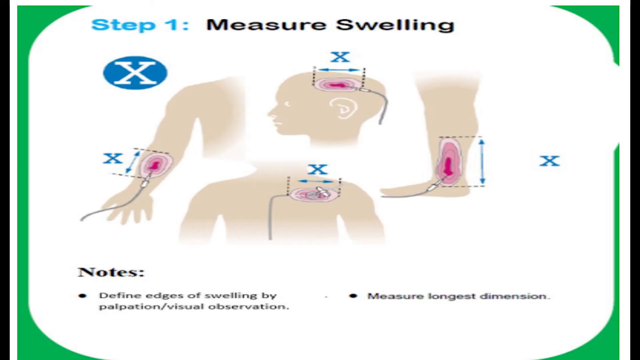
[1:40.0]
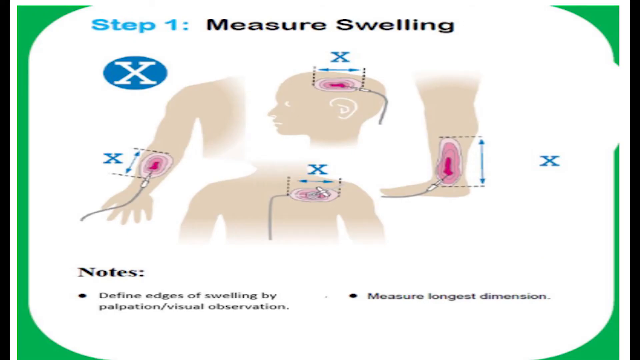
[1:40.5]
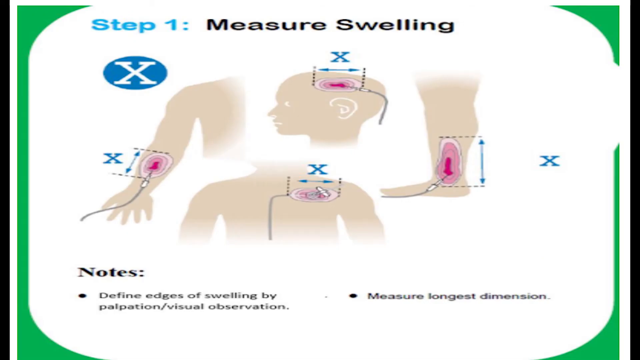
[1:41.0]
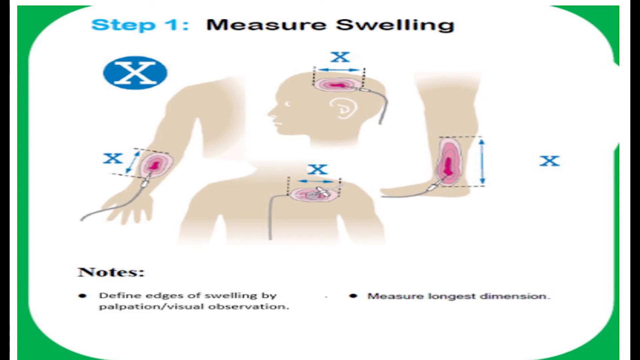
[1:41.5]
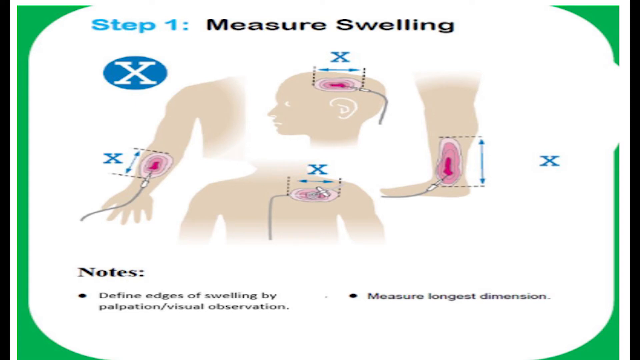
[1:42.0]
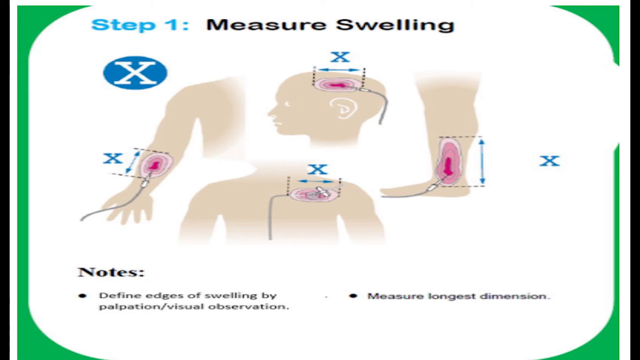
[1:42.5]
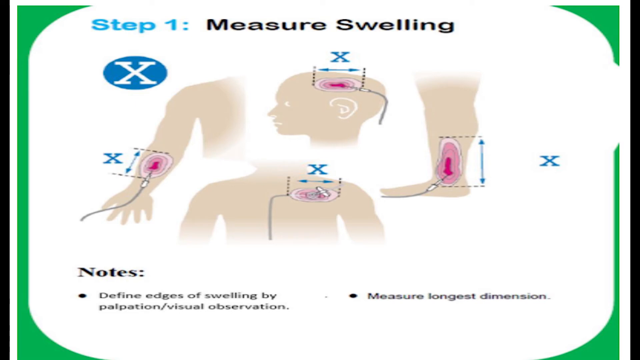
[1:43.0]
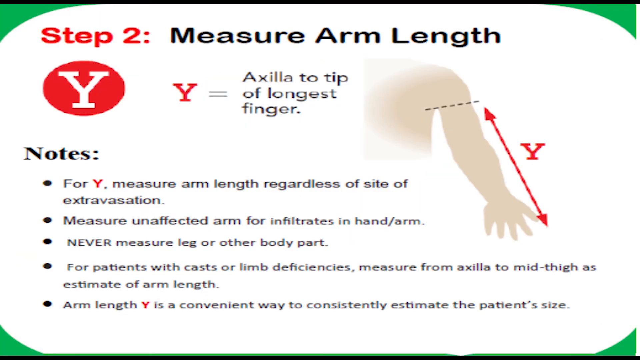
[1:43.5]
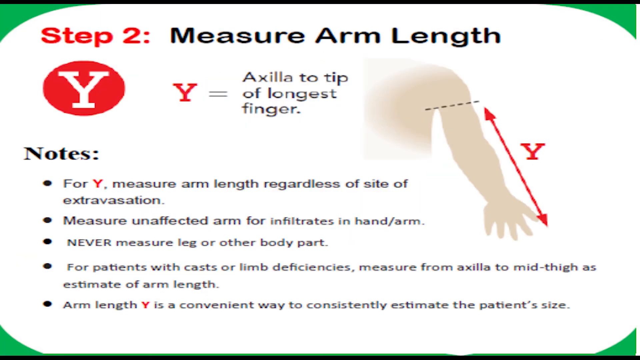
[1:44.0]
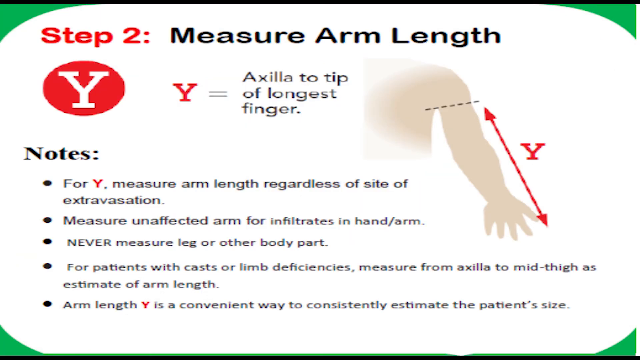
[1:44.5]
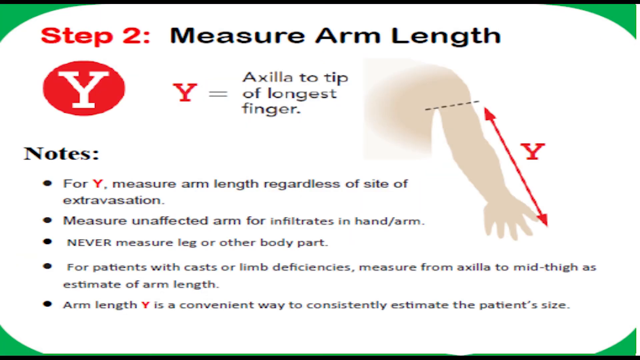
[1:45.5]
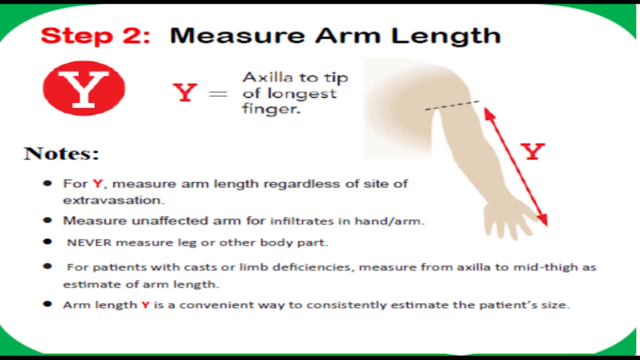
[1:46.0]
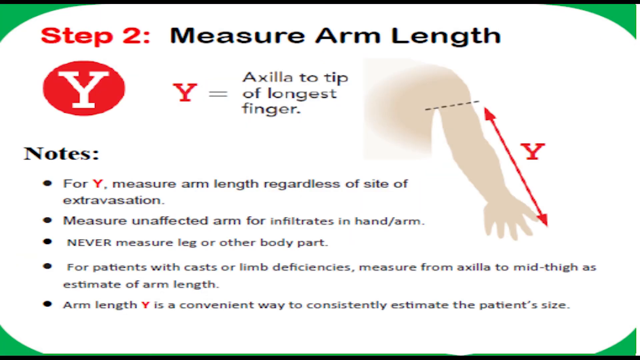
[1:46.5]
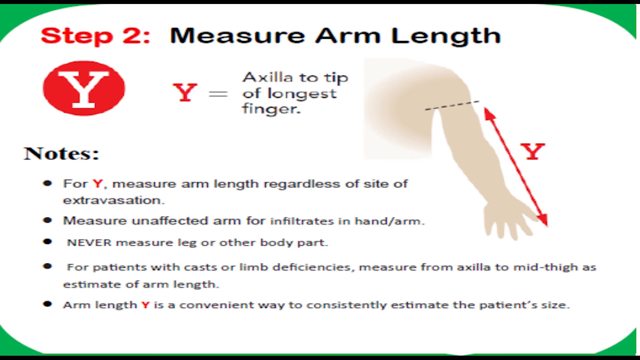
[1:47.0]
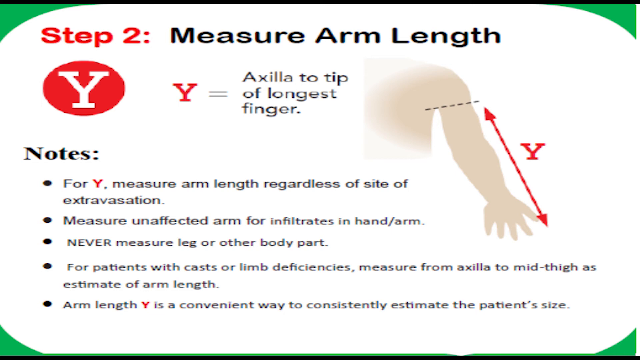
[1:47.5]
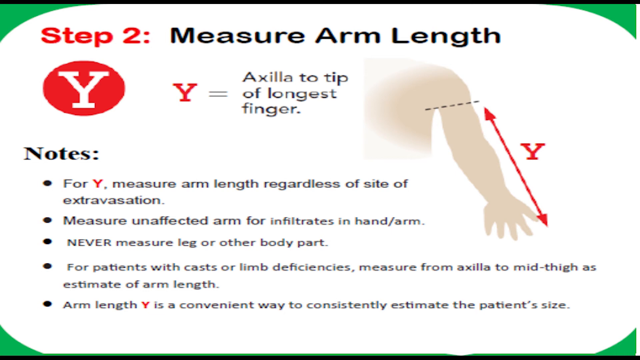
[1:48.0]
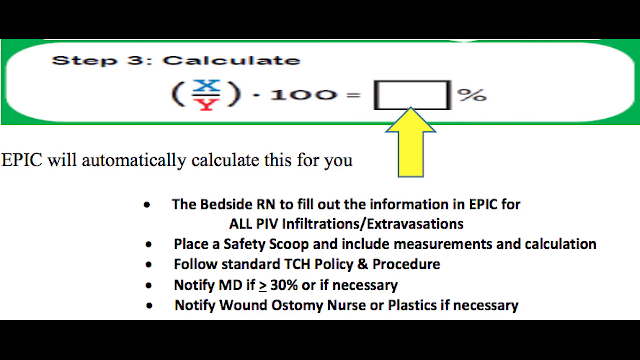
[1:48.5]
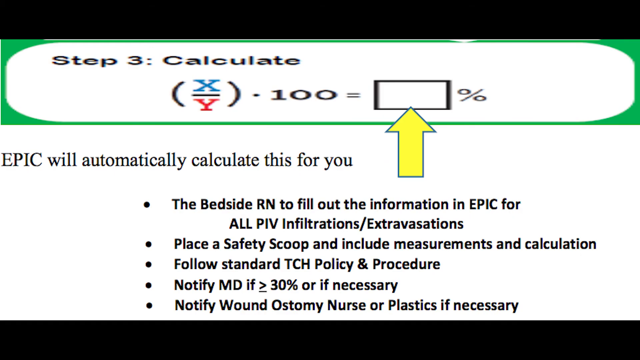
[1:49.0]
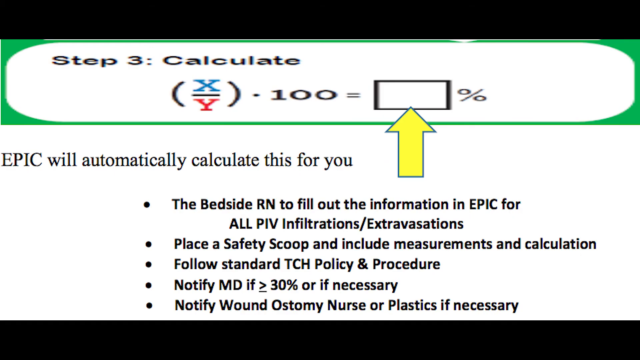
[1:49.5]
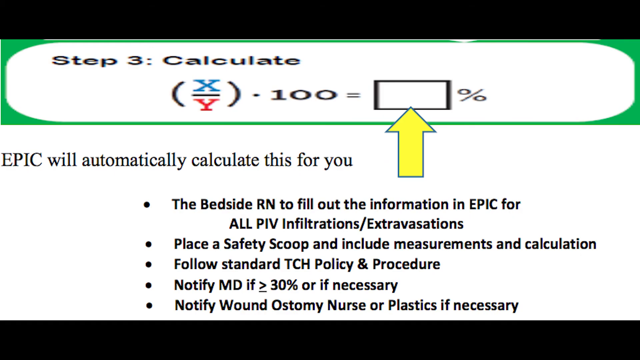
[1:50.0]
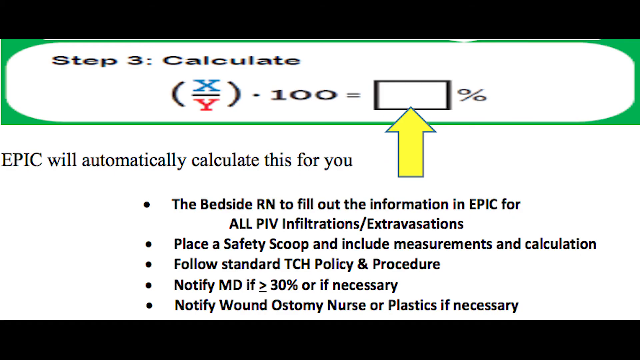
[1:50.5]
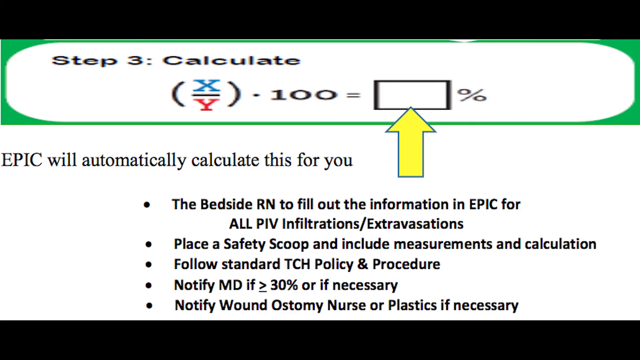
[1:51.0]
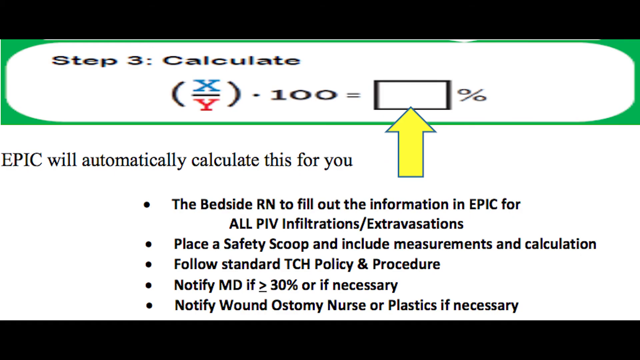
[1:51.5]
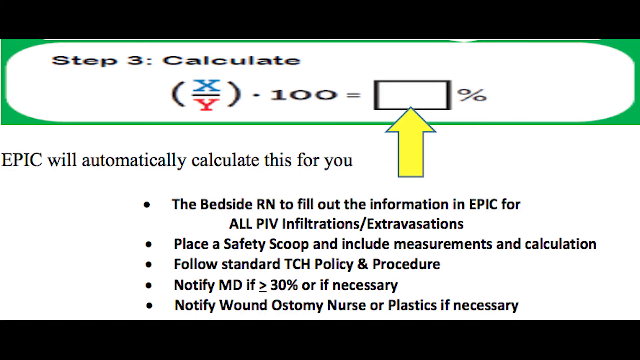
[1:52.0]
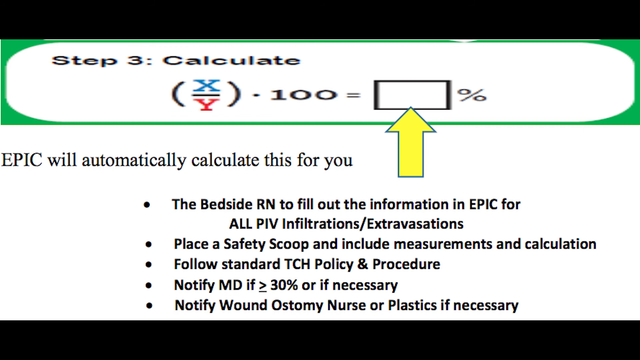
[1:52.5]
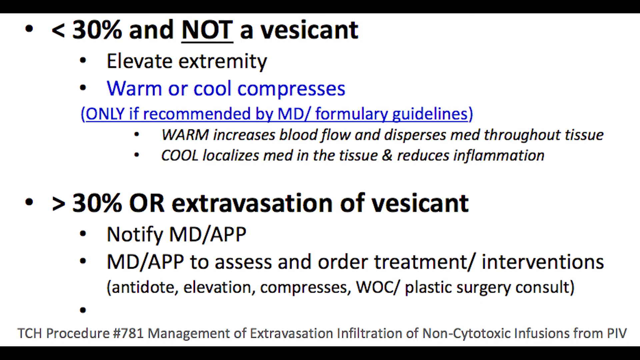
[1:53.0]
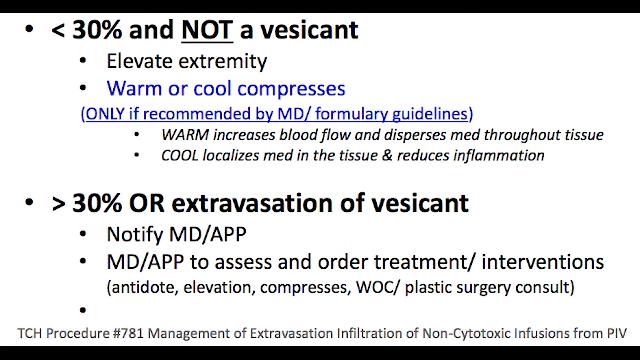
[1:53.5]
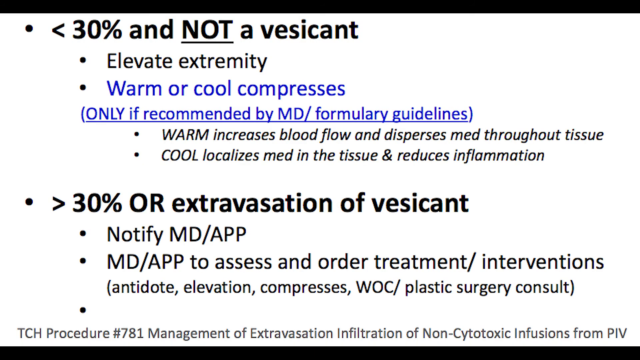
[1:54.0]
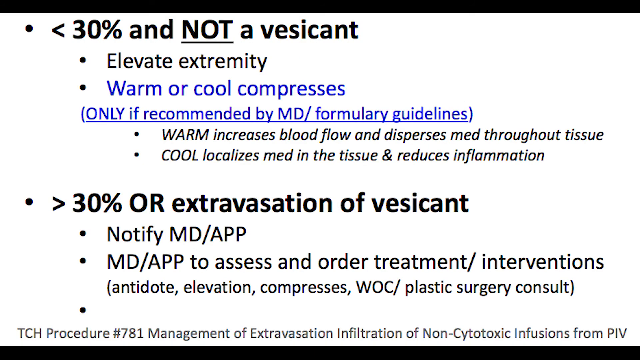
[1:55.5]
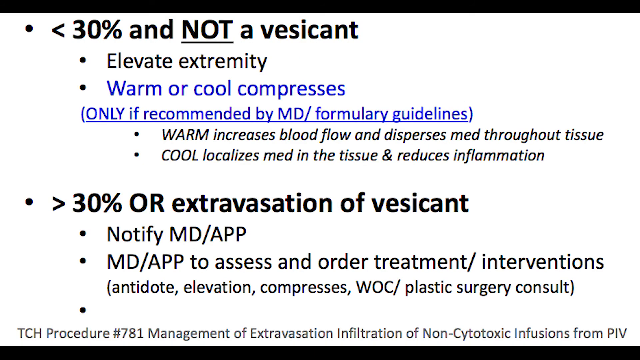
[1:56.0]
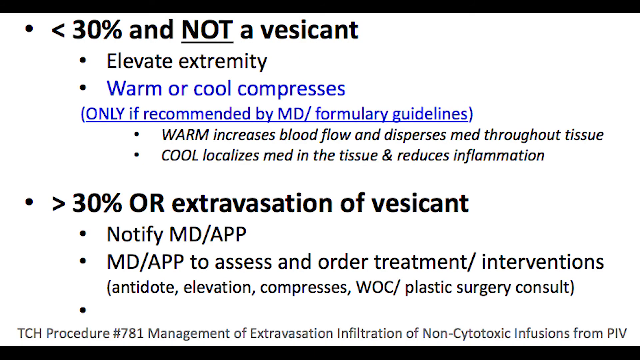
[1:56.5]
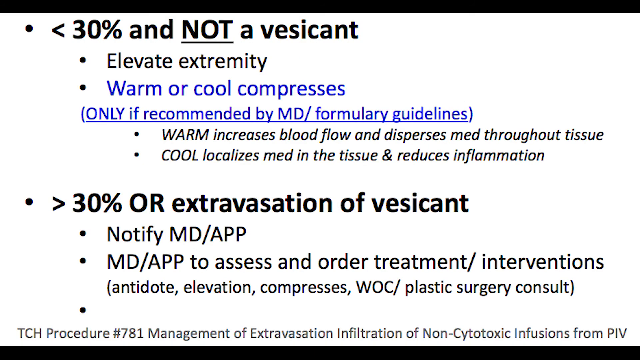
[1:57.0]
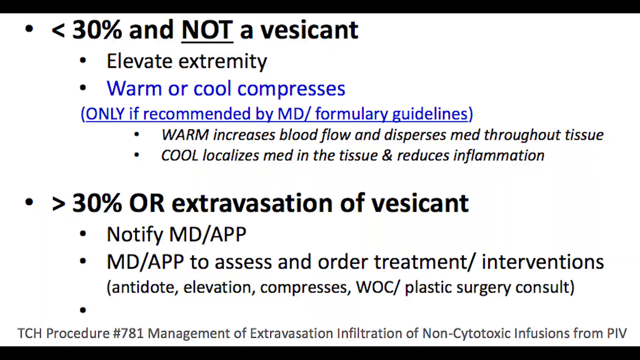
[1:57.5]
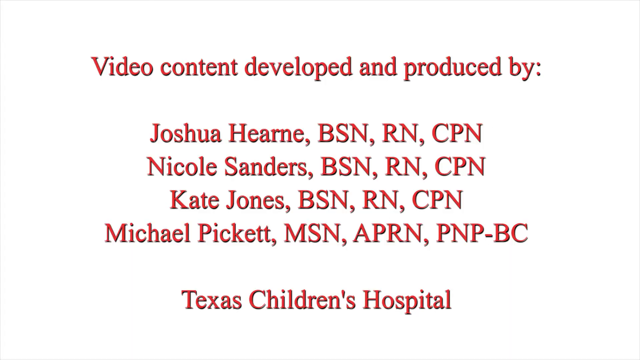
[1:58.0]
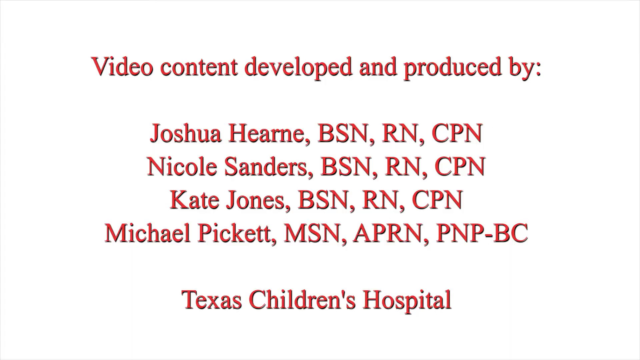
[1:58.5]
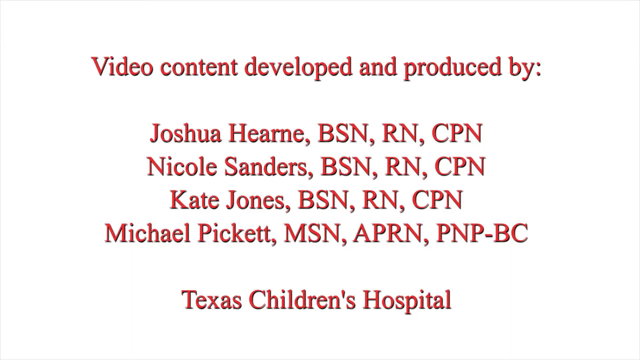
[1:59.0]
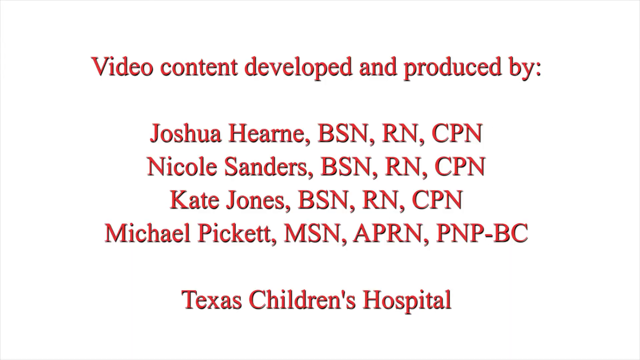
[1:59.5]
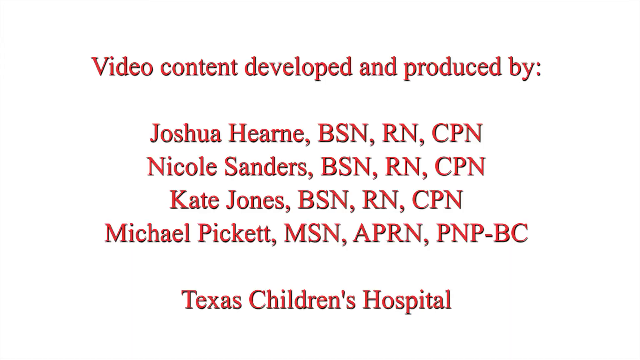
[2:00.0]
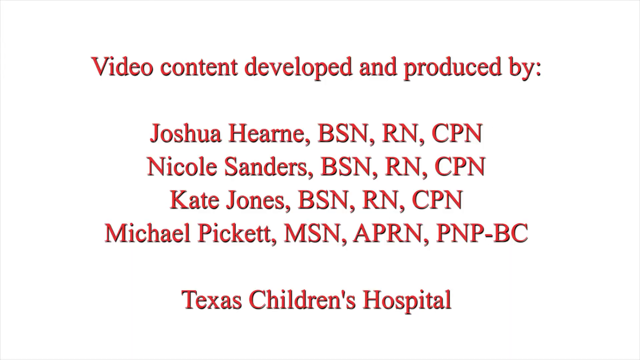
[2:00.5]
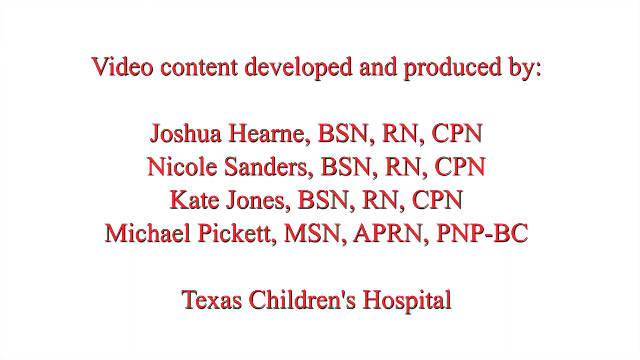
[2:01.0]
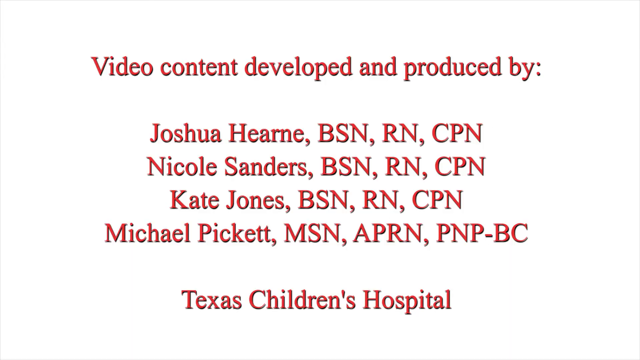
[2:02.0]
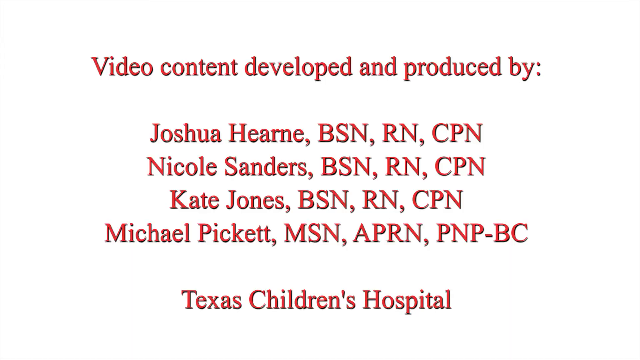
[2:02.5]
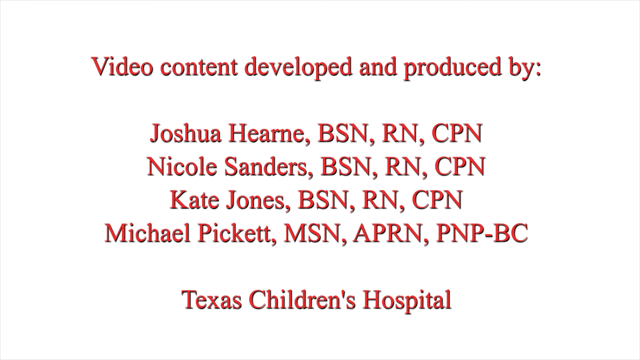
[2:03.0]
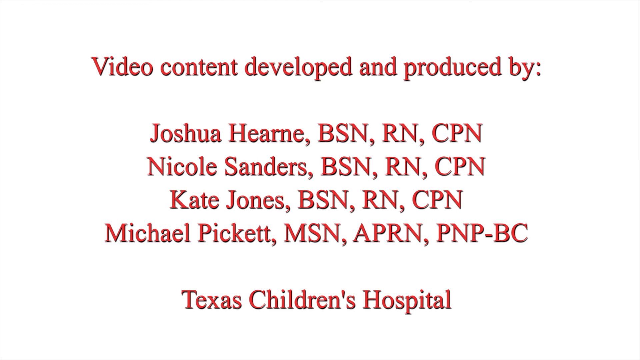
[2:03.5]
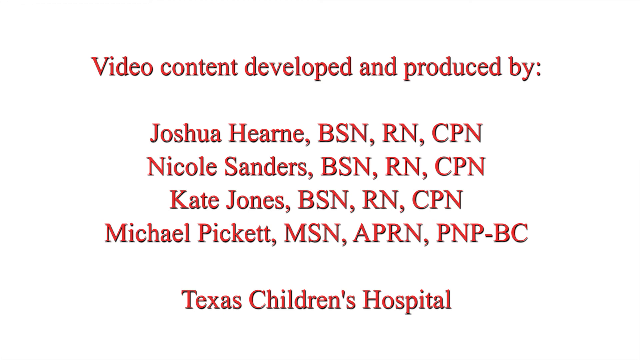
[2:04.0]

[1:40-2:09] A picture explains Step 1 in more depth, showing a child's head, torso, arm, and leg with various x's across the parts of the body lit up in pink. Underneath the image are two bullet points labeled notes about defining the edges of swelling by visual observation and measuring the longest dimension. The next step, measuring the arm length, has four bullet points listed underneath it. It shows a simple image of a person's arm, matching where the child mannequin was measured, with a red line along where the measuring tape was held, labeled Y, and next to it the text "Y equals Axilla to tip of longest finger." Step three is then shown, covering how to calculate the information, including where to enter it on a website called EPIC so that it calculates the result. At the end of the video, the different medical personnel who developed the content are shown.